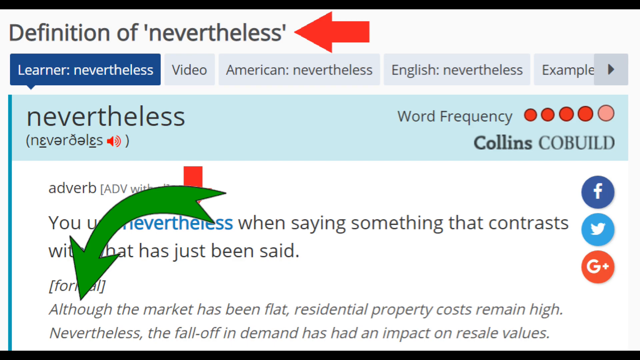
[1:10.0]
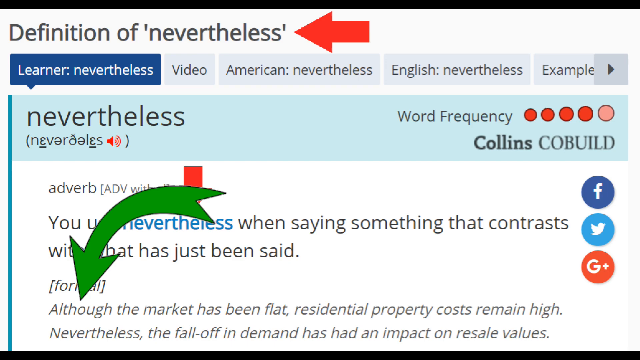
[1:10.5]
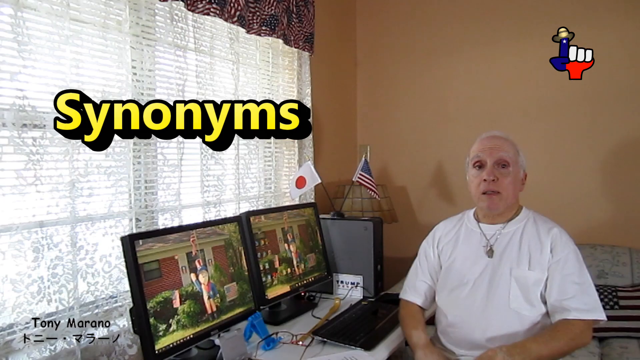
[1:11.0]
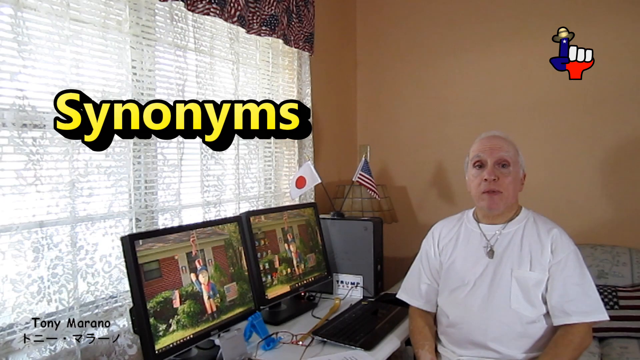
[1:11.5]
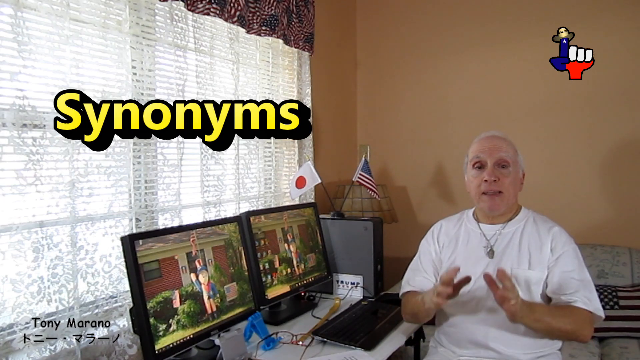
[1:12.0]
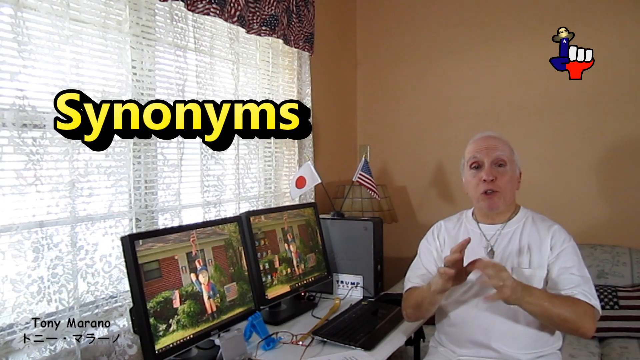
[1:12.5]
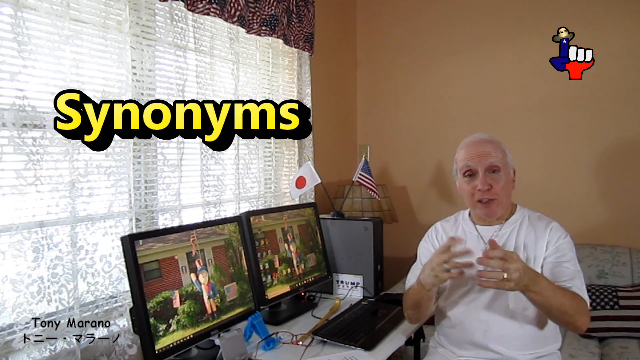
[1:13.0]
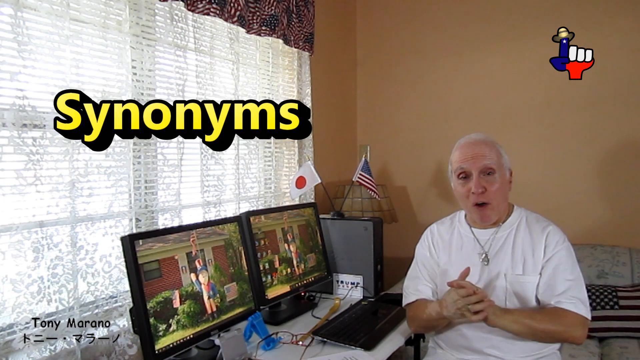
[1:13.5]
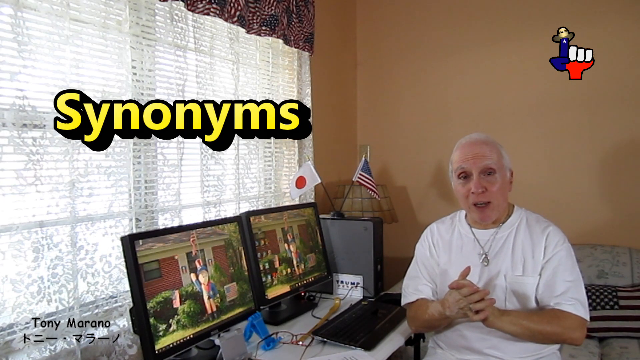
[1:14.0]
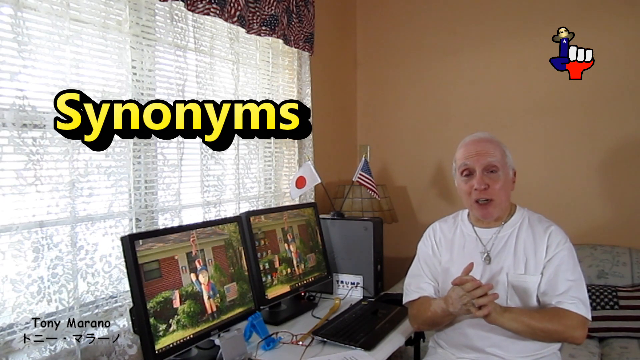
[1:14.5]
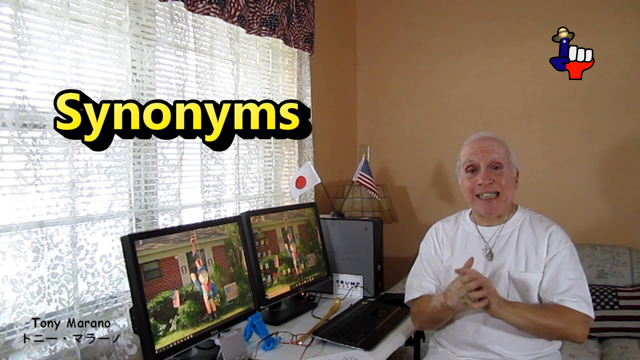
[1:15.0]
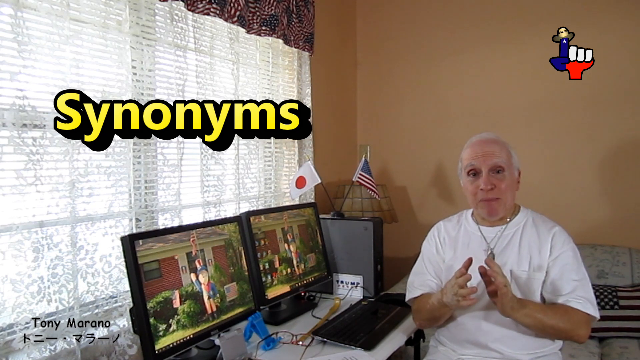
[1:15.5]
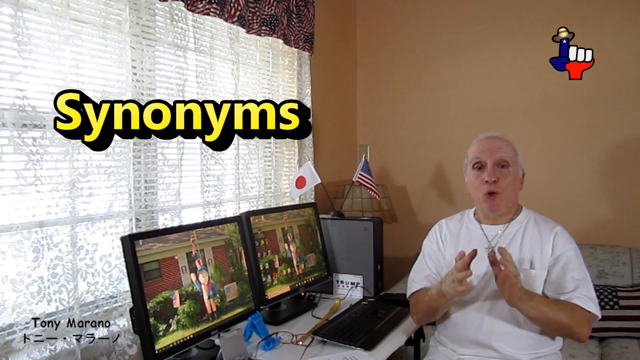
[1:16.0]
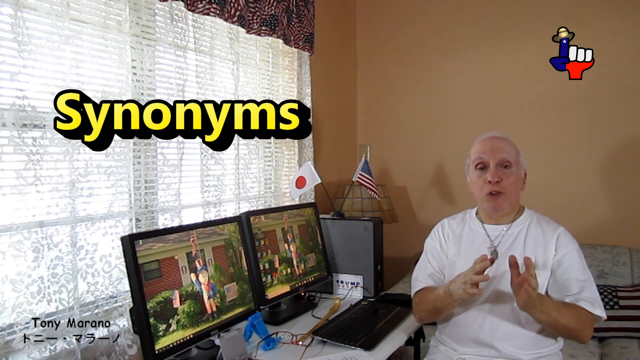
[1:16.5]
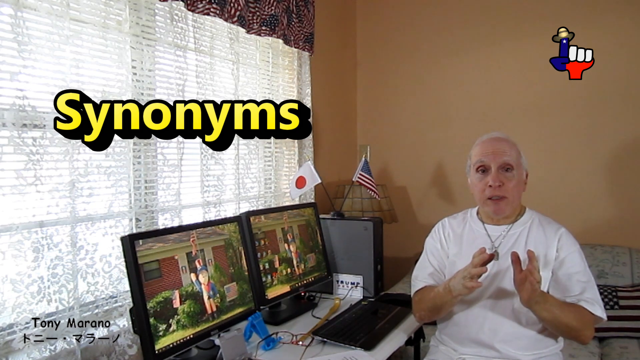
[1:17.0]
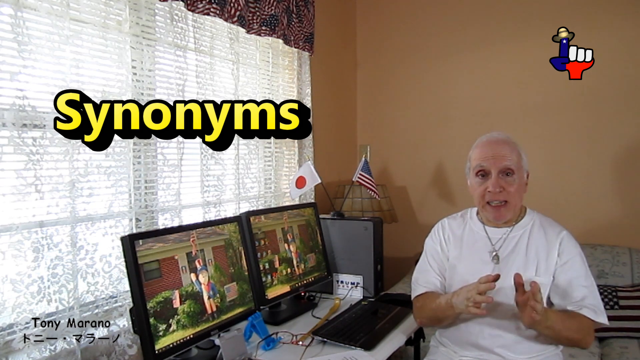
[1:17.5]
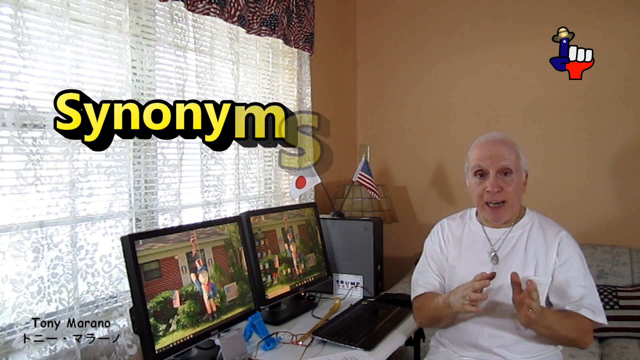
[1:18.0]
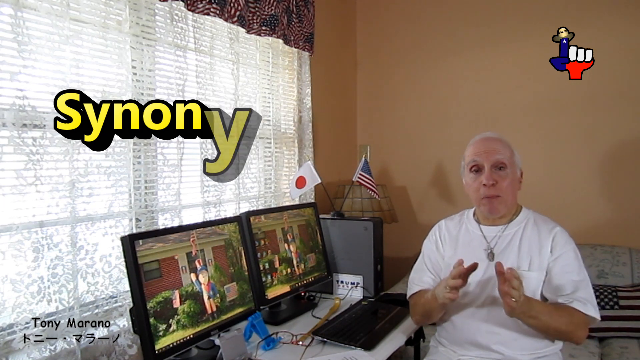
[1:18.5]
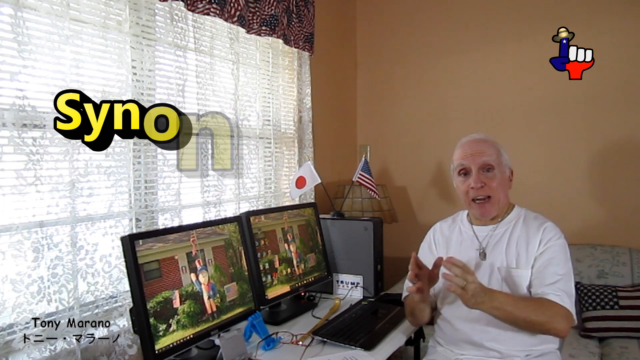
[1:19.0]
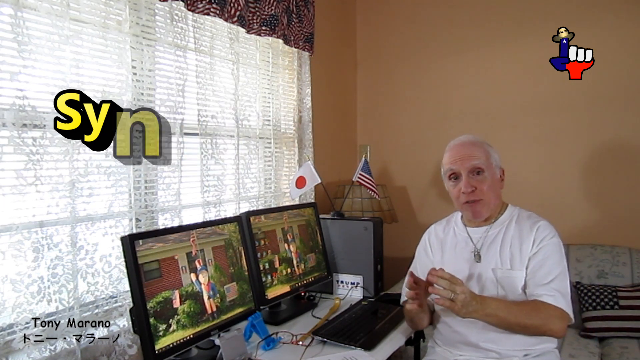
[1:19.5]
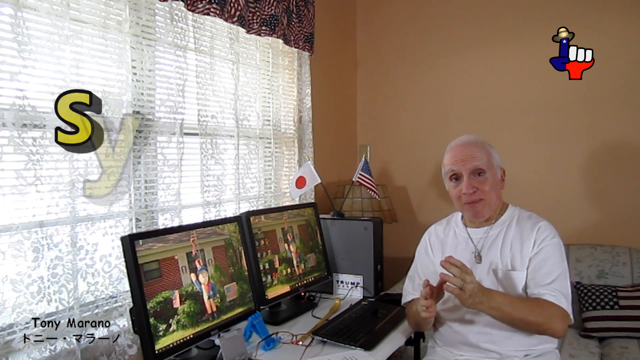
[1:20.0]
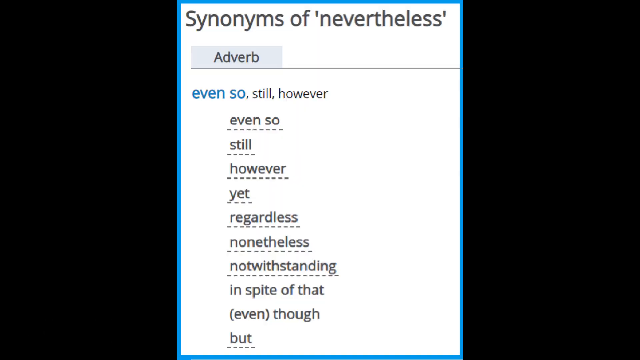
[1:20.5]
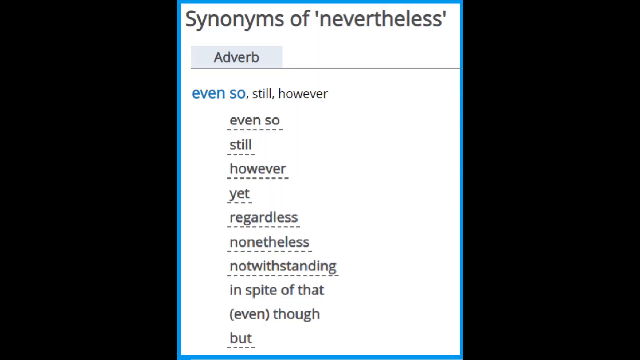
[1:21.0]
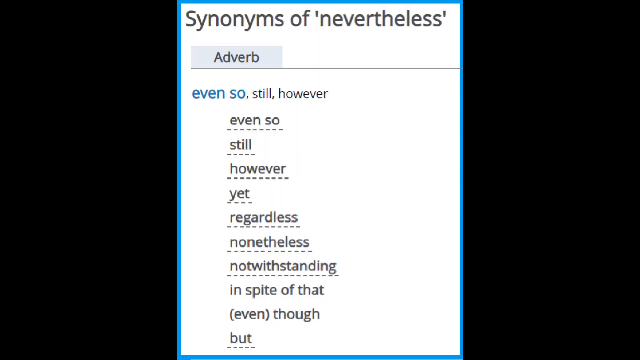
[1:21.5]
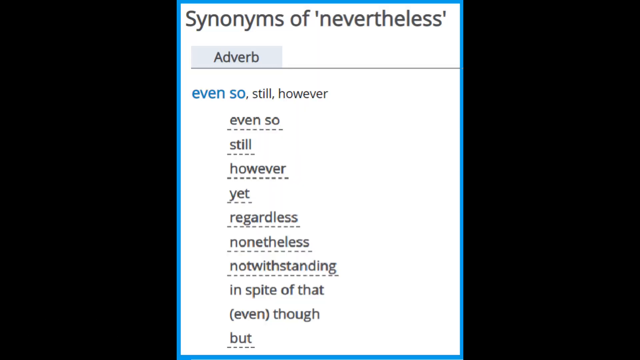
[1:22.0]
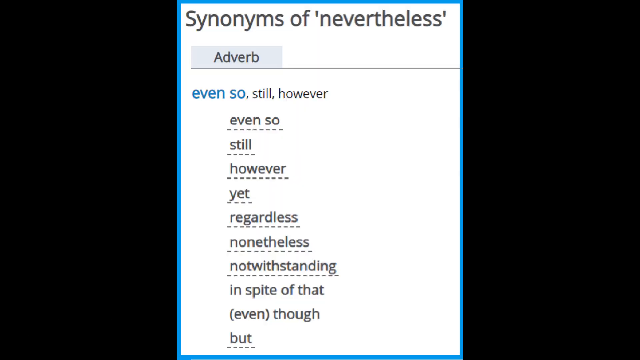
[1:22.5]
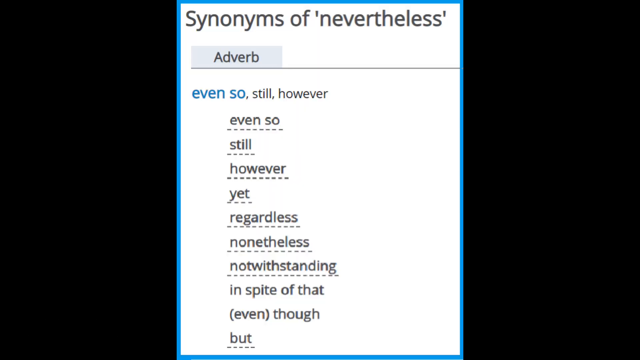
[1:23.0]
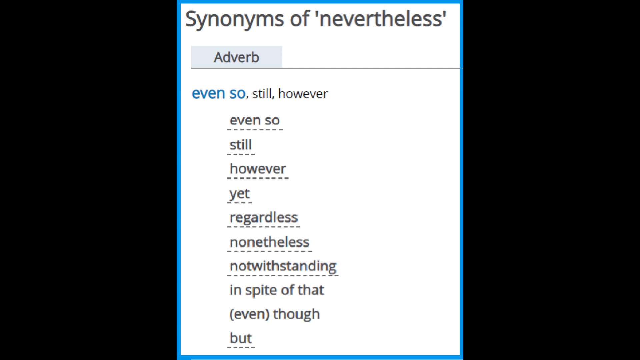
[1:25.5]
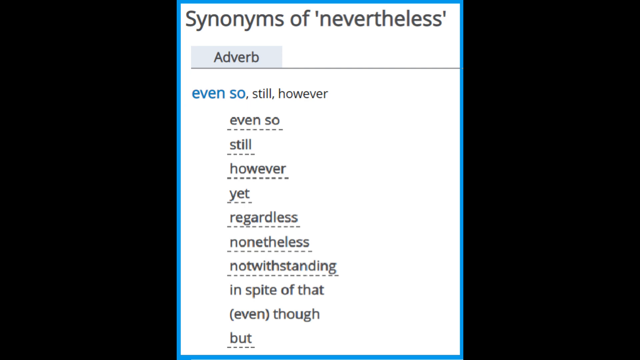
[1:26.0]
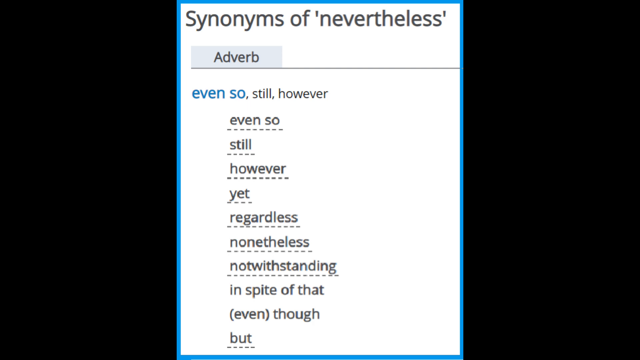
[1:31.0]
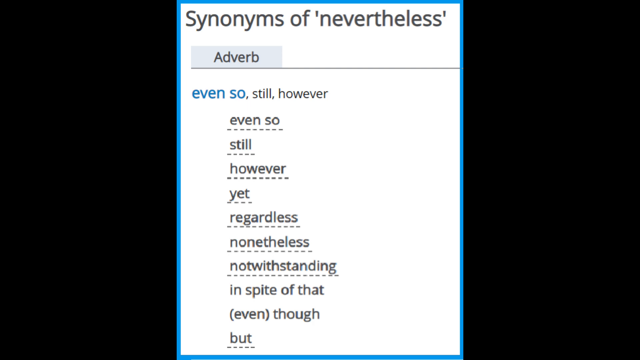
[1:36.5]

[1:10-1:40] A man sits on the right side of the screen, facing the camera and speaking directly into it. He has very short white hair and wears a short-sleeved white shirt and a necklace with a charm on it. To his right is a white desk with two desktop computers side by side, and to the right of both is a small computer tower with two small flags on top, a China flag and an American flag. Above that, the word "Synonym" appears in yellow. The screen then goes black, with a separate white screen in the middle. At the top of it, text reads "synonyms of nevertheless," underneath that "adverb," and underneath that "even so, still, however." A list below reads "even so, still, however, yet, regardless, nonetheless, notwithstanding, in spite of that, even though, and but."